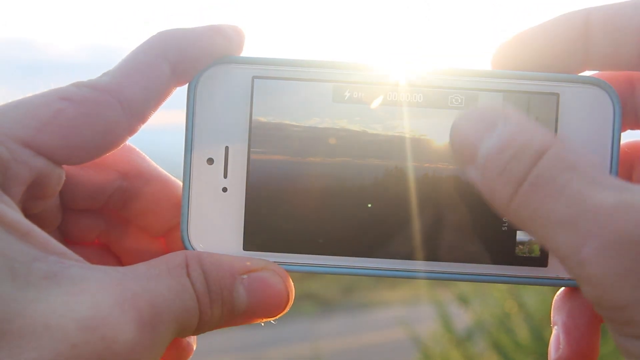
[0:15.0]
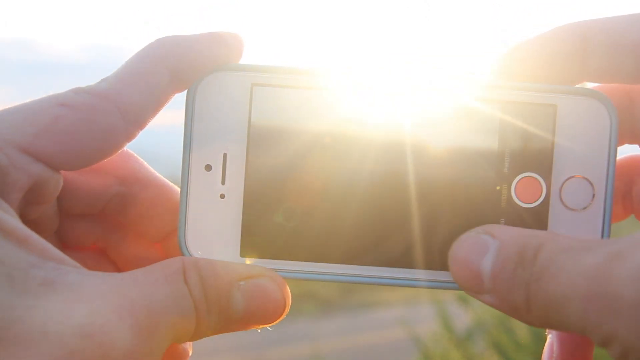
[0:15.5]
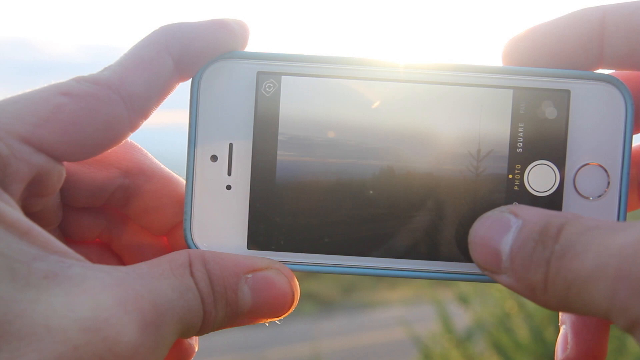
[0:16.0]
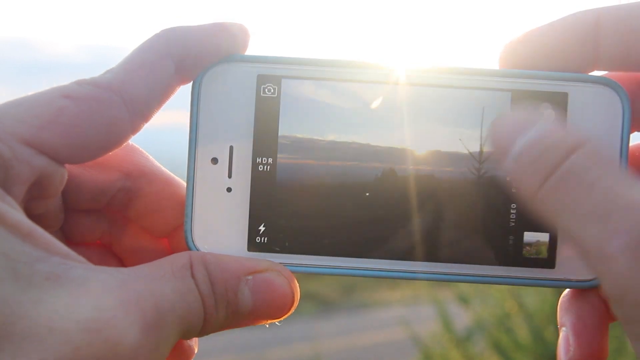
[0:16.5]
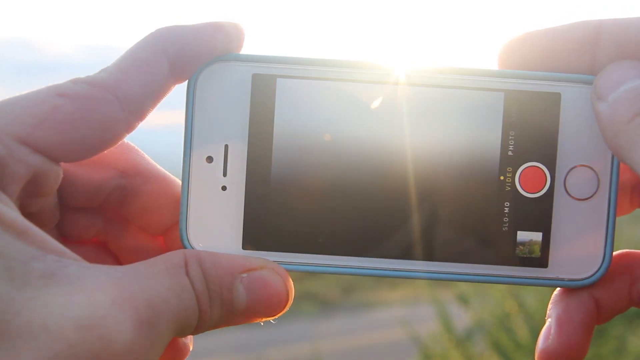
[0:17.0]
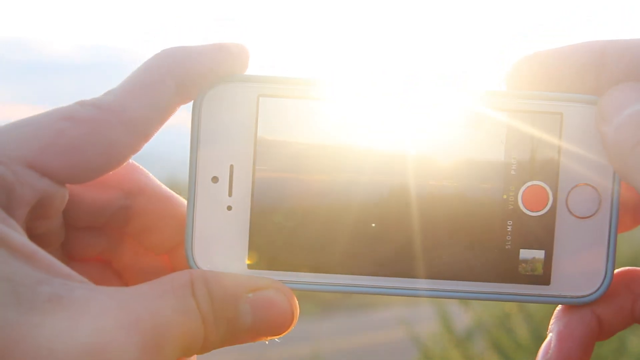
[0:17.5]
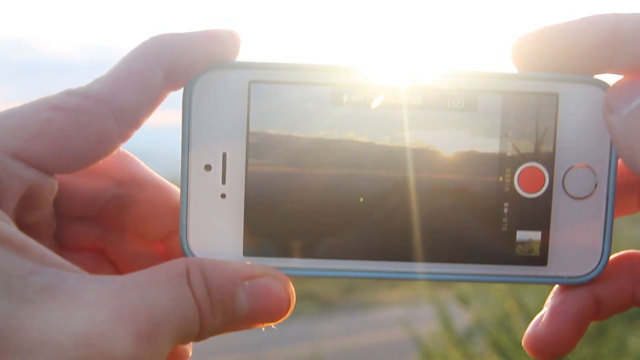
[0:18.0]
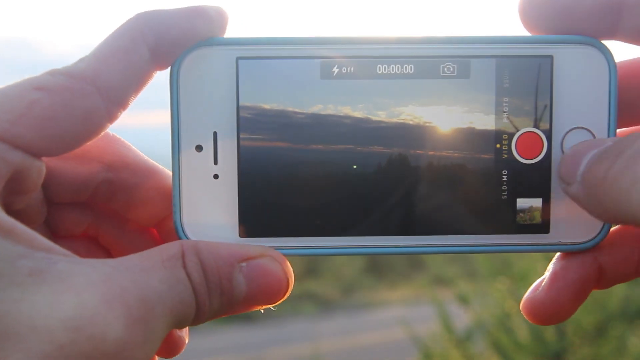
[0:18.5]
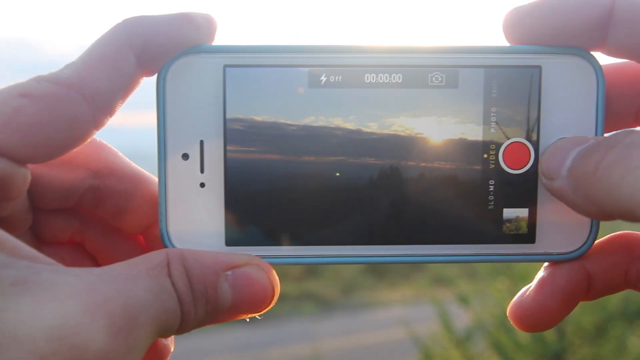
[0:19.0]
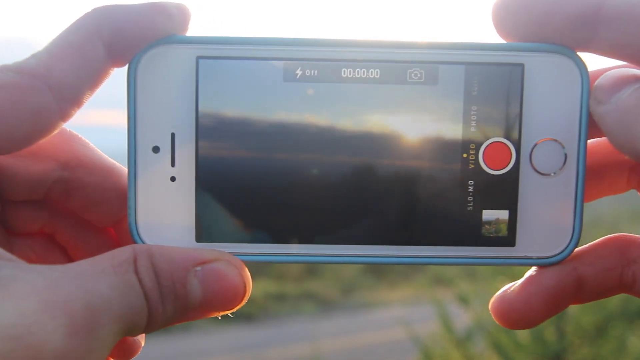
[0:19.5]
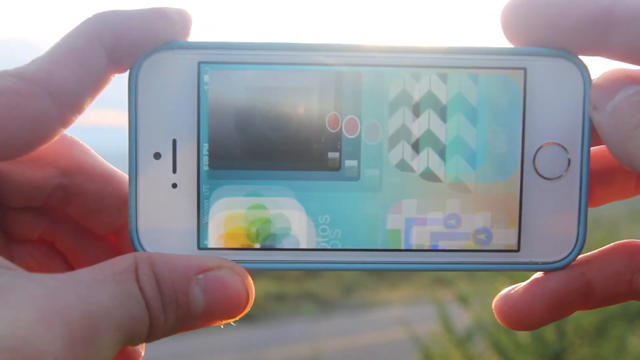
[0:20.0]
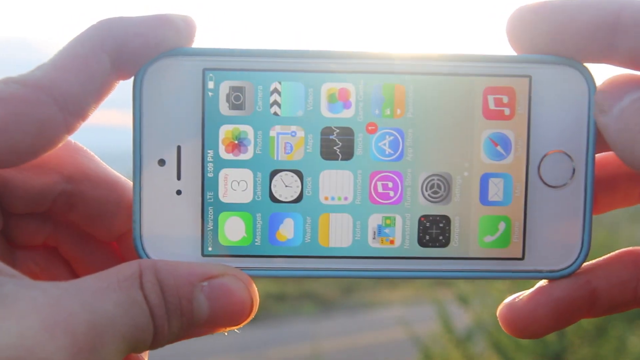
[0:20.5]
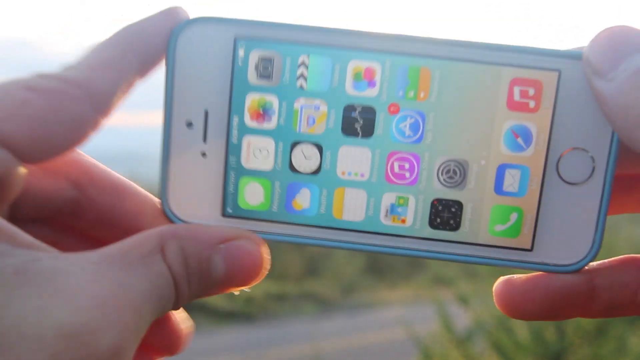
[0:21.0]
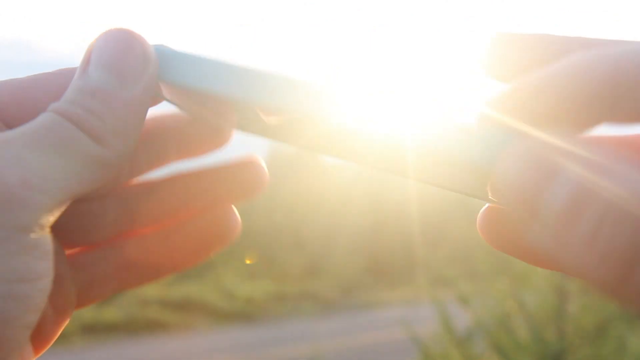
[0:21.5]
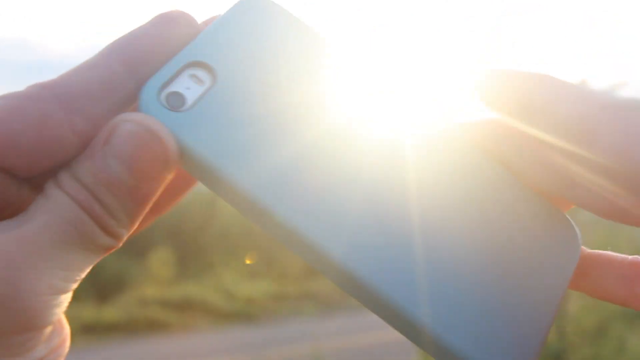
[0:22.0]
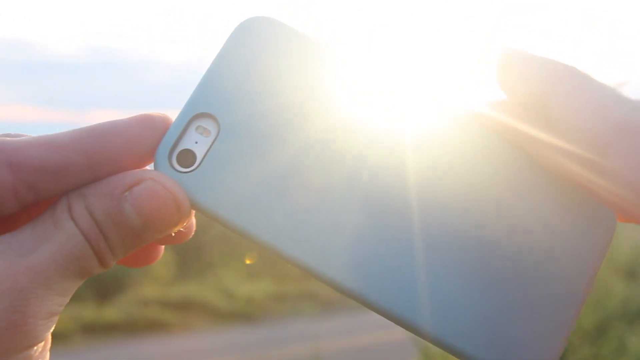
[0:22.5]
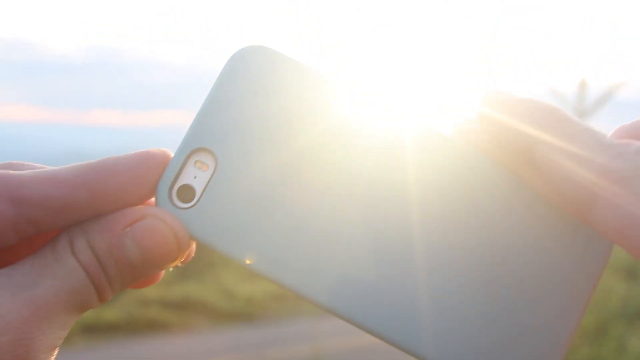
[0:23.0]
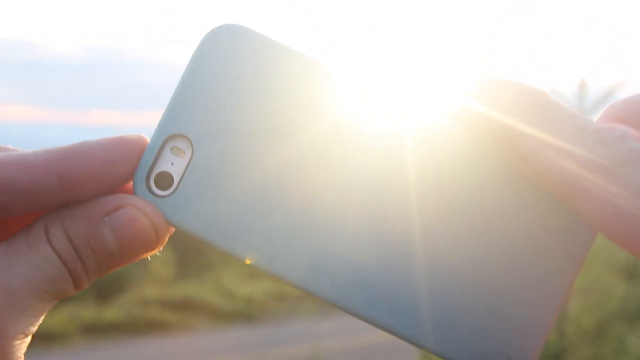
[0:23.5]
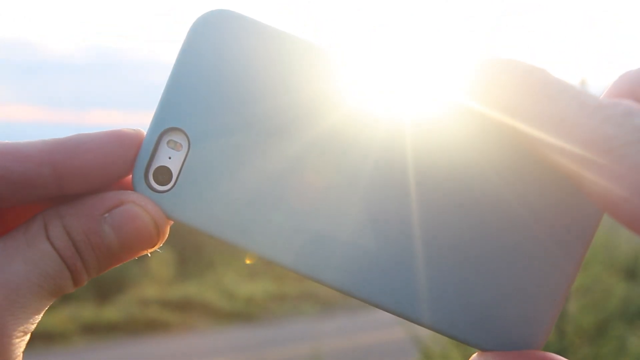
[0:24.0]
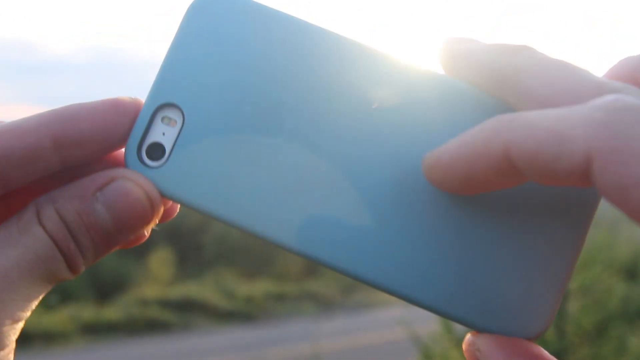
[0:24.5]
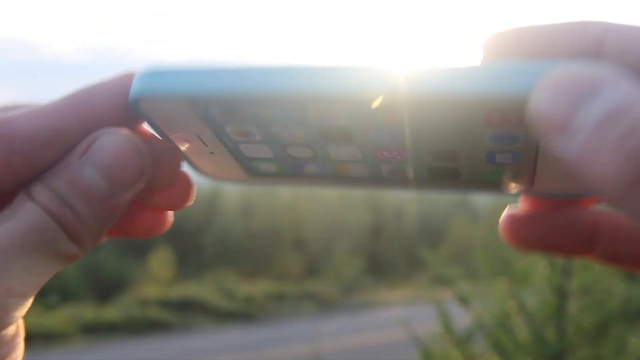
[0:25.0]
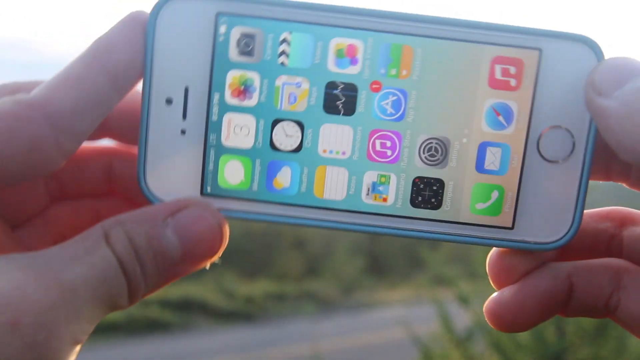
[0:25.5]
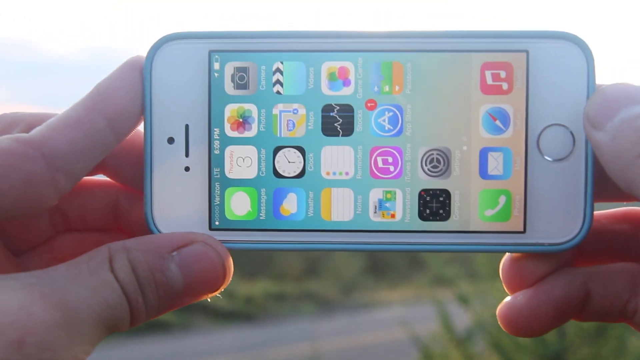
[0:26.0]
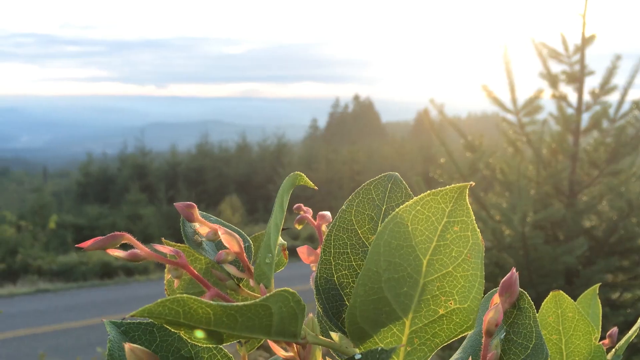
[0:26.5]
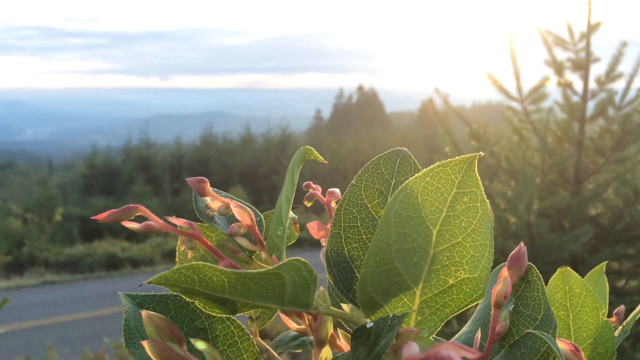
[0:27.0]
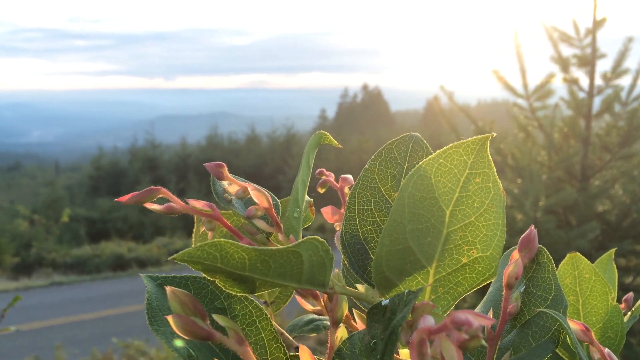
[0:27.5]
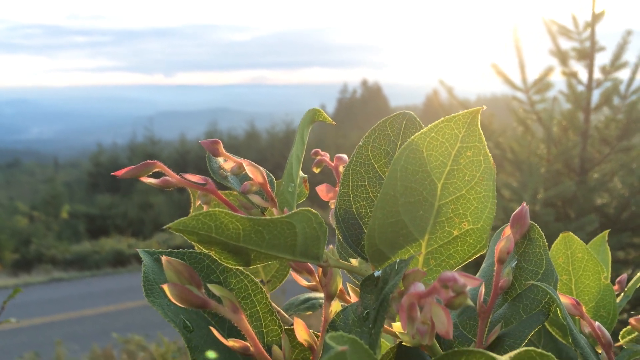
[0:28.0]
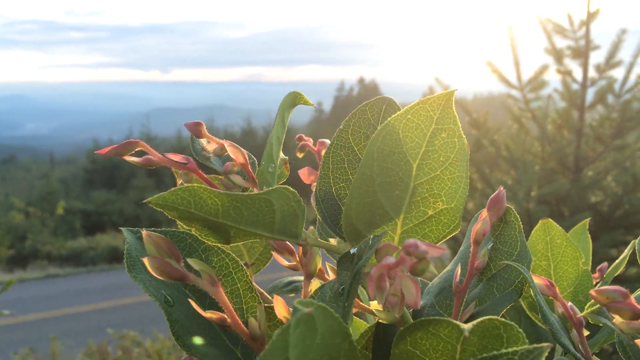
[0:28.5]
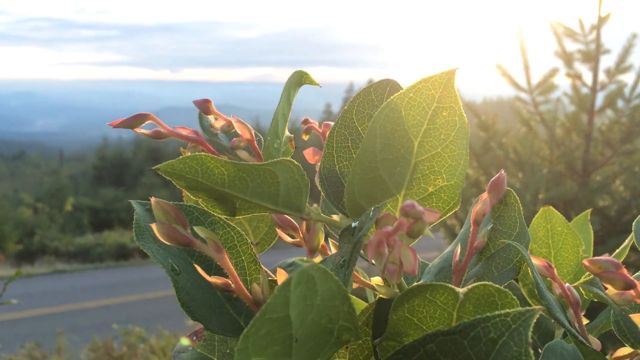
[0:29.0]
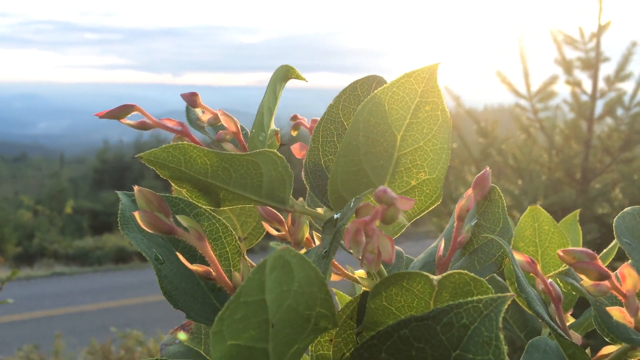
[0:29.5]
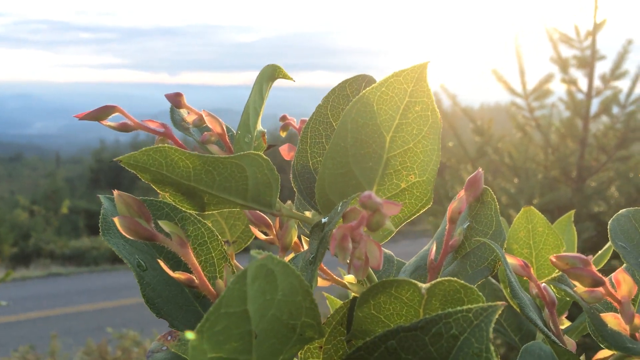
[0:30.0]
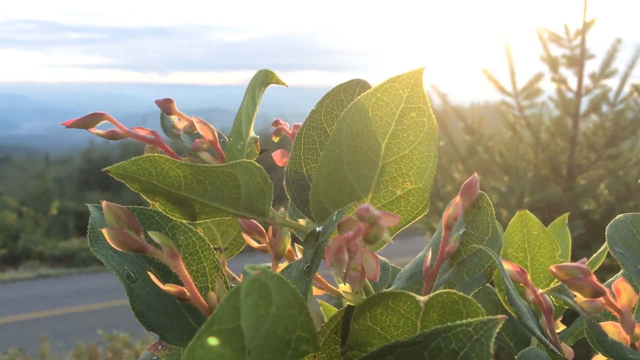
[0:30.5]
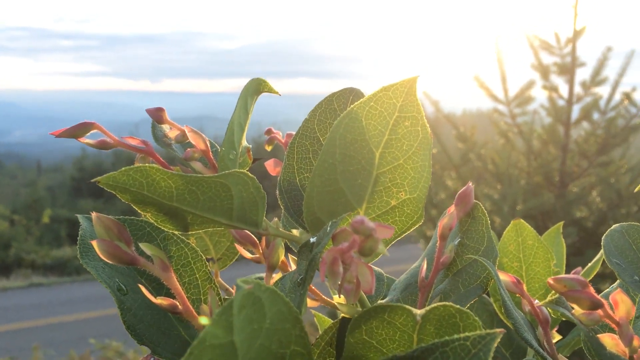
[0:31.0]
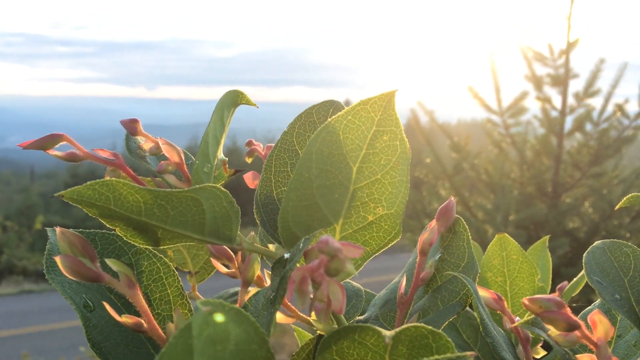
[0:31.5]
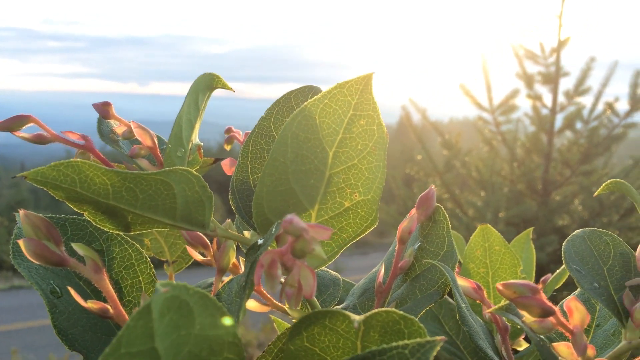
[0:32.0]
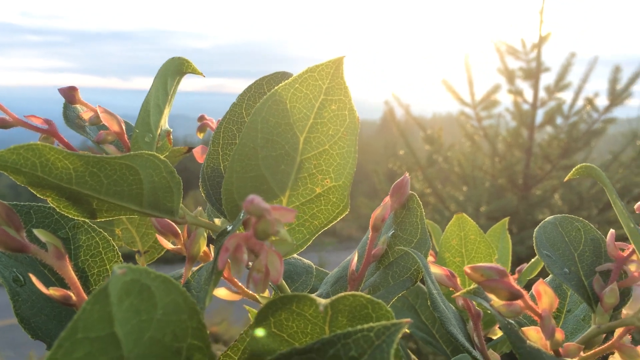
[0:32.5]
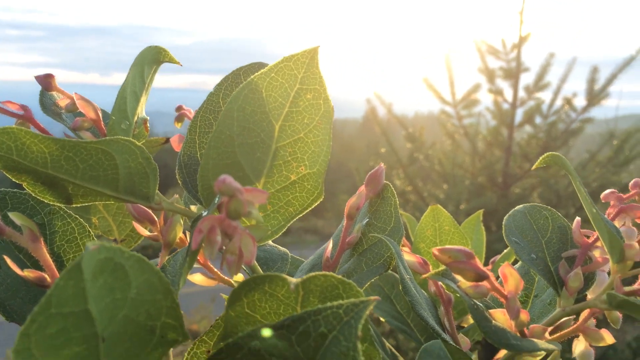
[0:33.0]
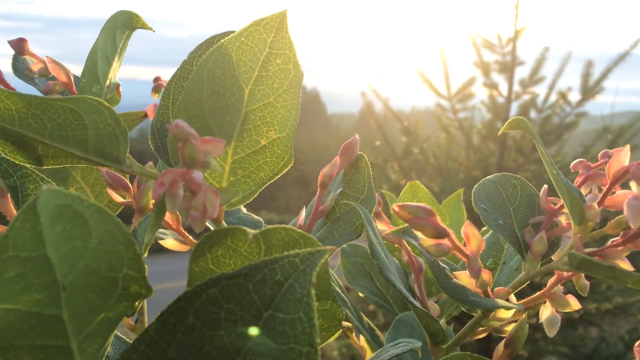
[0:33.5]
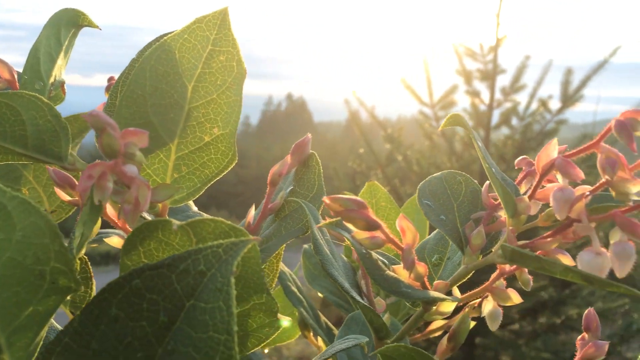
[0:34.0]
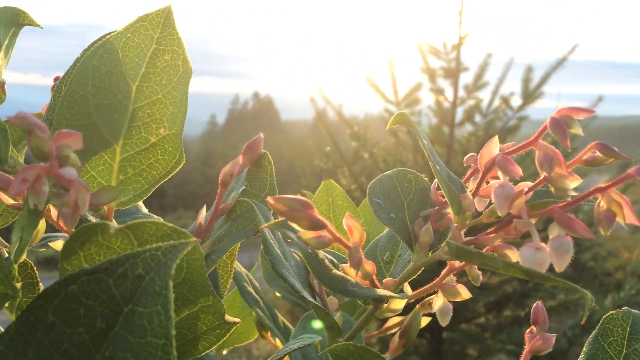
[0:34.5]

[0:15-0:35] The man continues recording the landscape. He swipes up once and taps the iPhone to close all the apps, then flips it over so the back of the phone faces the camera and the front faces the sunlight. An edit cuts to a close-up of flowers and foliage, mainly green leaves with some pinkish stems of flower bulbs. The video cuts back to him recording the landscape and flipping the phone over, with a bright glare taking up most of the top half of the image. It cuts to the green leaves and flowers, with the highway and its yellow divider line a little behind them and more tree lines and foliage lines behind that. After another cut, the phone's camera view shows maybe some water in the distance, and blue sky is visible behind the phone when he flips it over. The next shot shows more mountainside spaces and sort of a horizon in the distance.